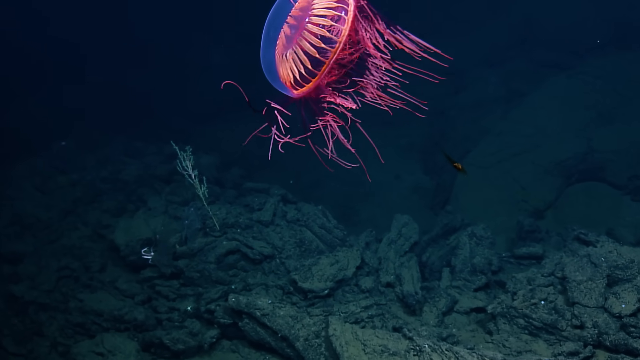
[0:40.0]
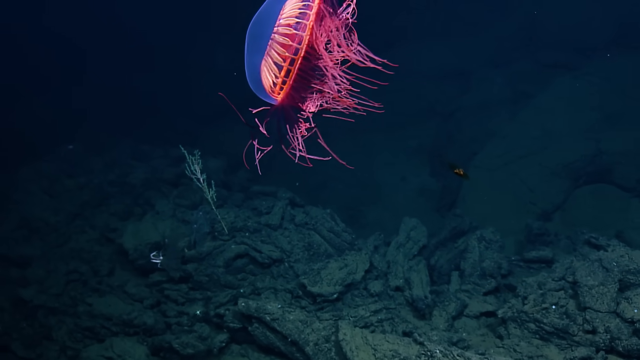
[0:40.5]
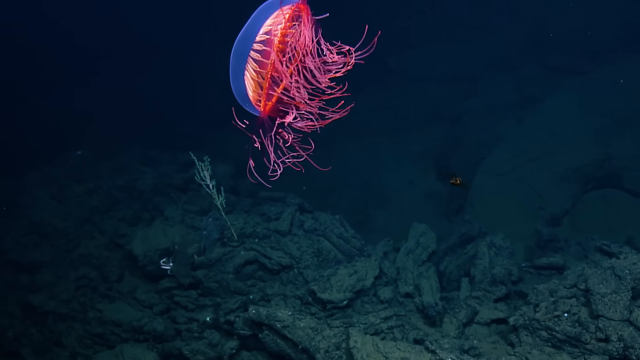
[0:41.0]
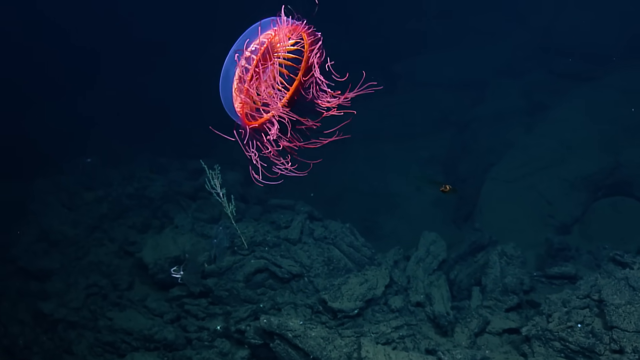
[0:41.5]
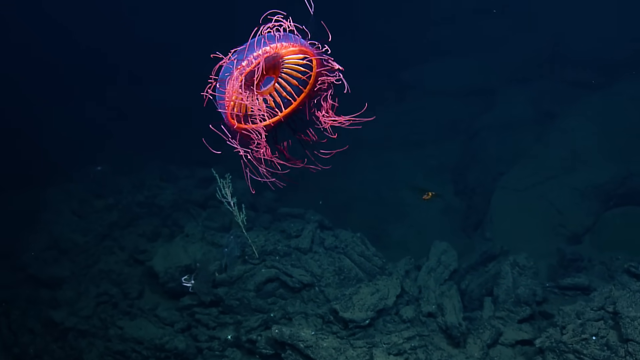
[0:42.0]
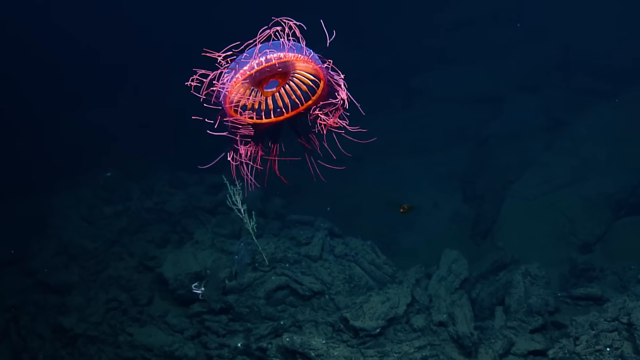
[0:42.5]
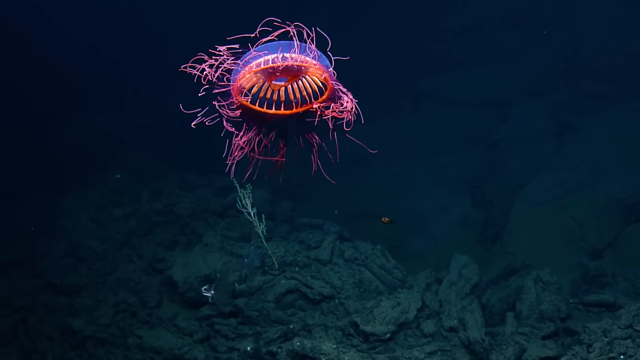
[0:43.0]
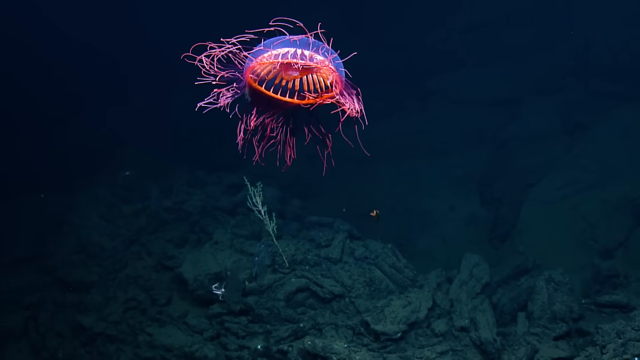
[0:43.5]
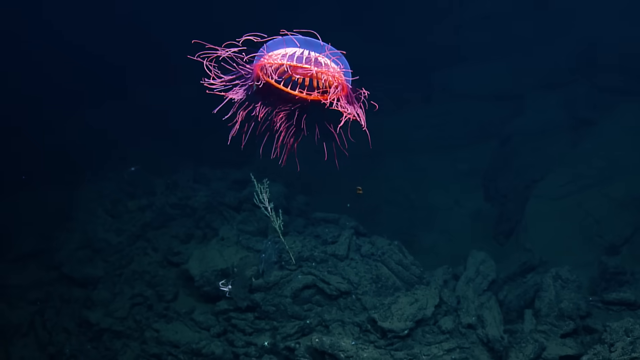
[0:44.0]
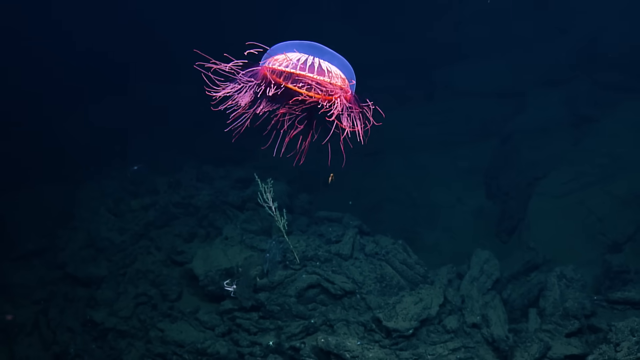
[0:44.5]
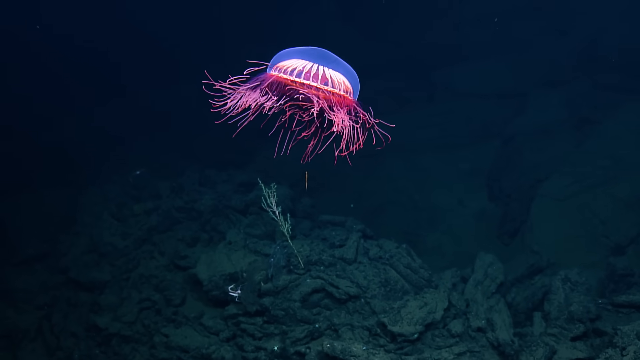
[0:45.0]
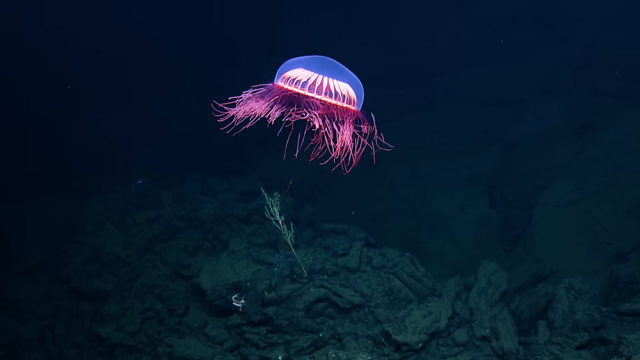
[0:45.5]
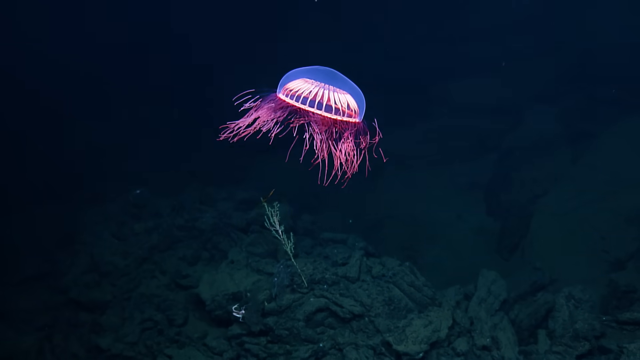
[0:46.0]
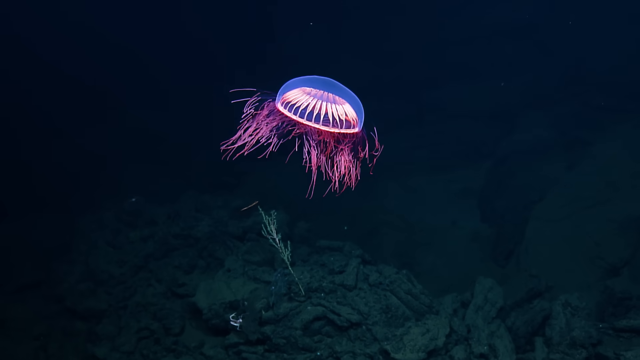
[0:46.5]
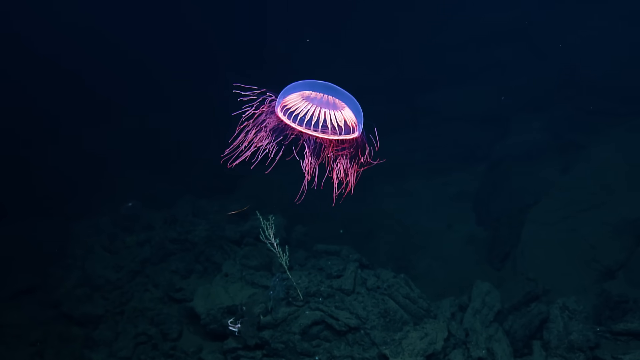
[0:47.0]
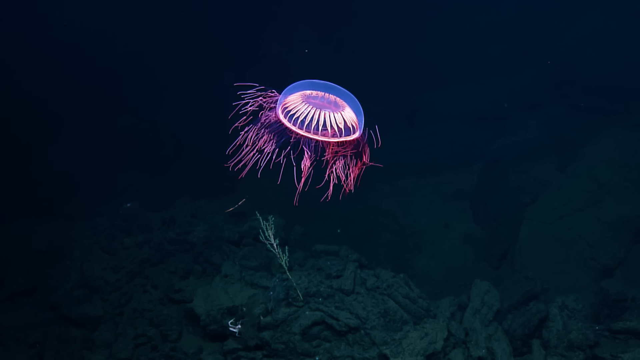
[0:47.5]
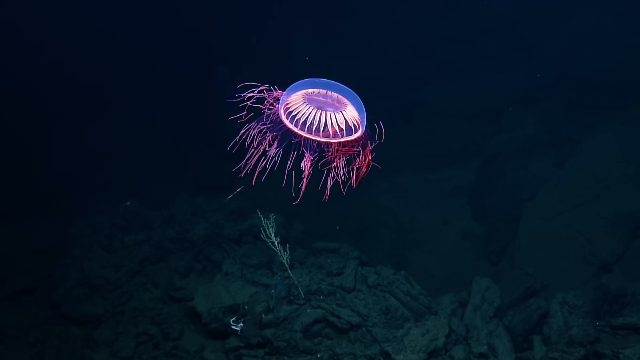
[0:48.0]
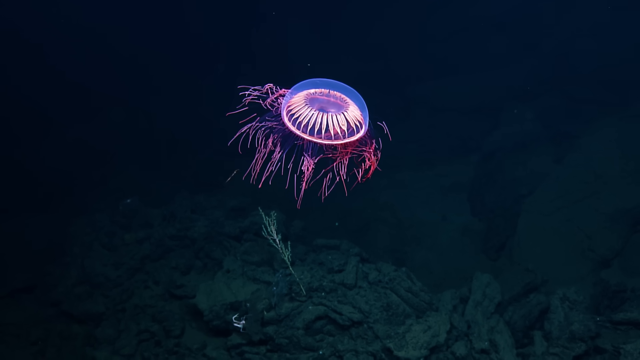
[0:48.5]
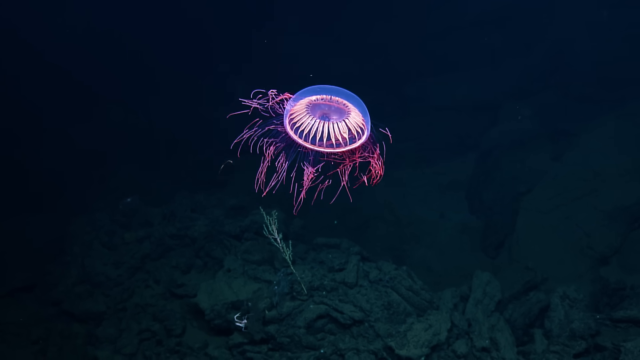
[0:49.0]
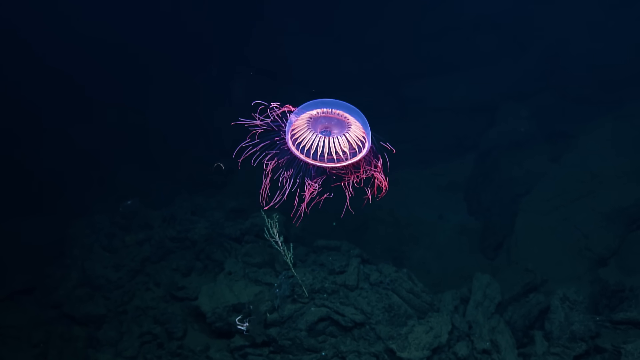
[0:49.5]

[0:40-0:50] The jellyfish does a 360 turn, after which its back comes into view. Before its full back is visible, it starts an upward turn that rotates it almost back into its original position, but not quite; during this maneuver it turns a little toward the viewer, slowing down as it turns. The tentacles look pink and stringy. While the front of the donut shape looked purple, the back of the donut is orange-looking, like an orange ring.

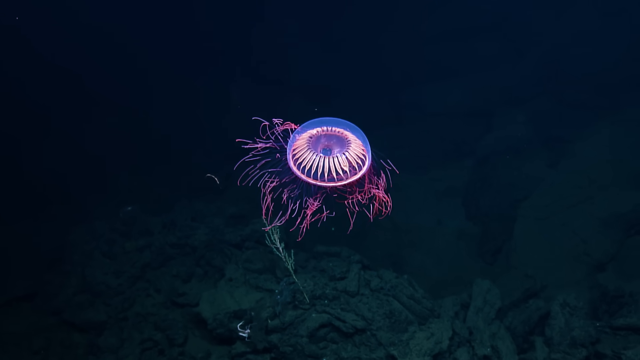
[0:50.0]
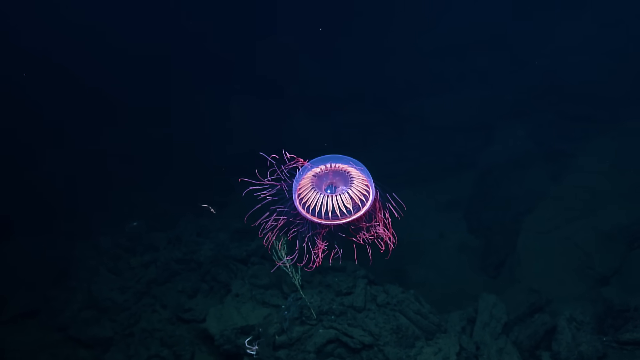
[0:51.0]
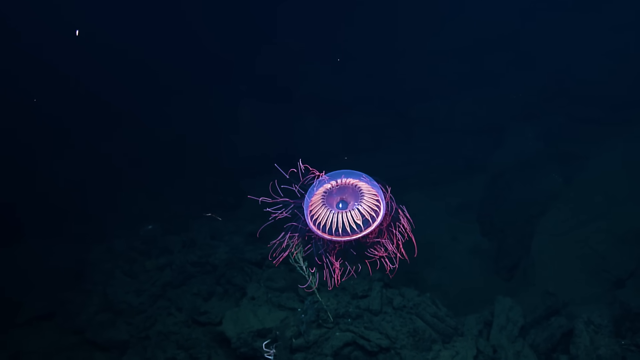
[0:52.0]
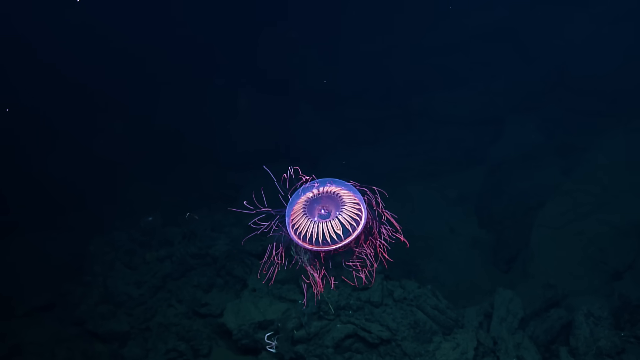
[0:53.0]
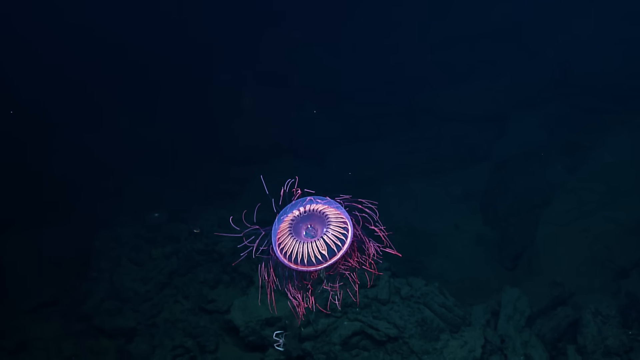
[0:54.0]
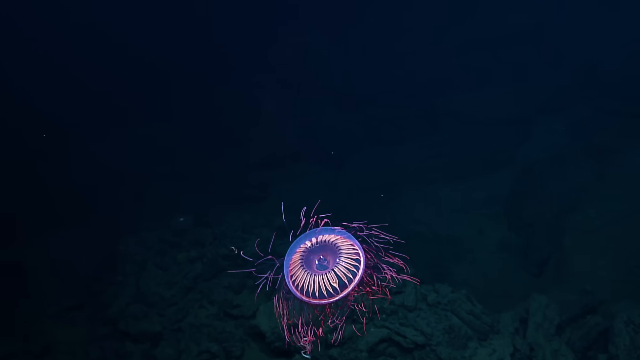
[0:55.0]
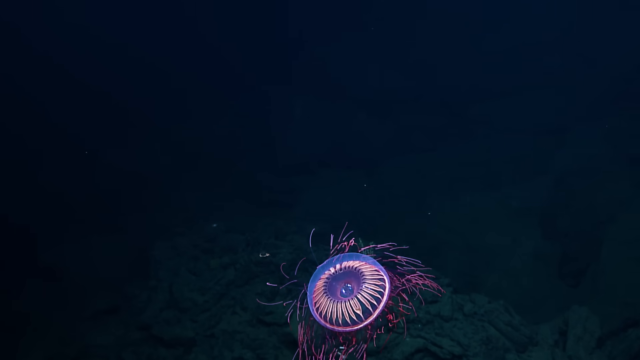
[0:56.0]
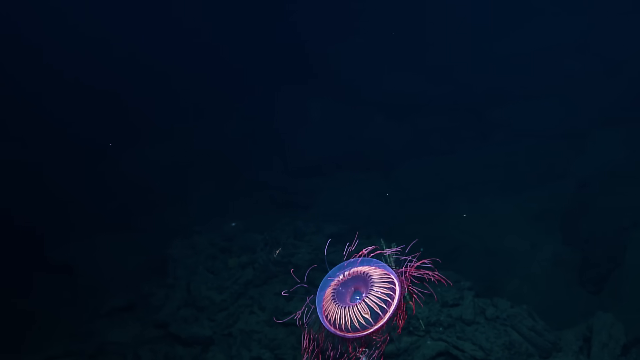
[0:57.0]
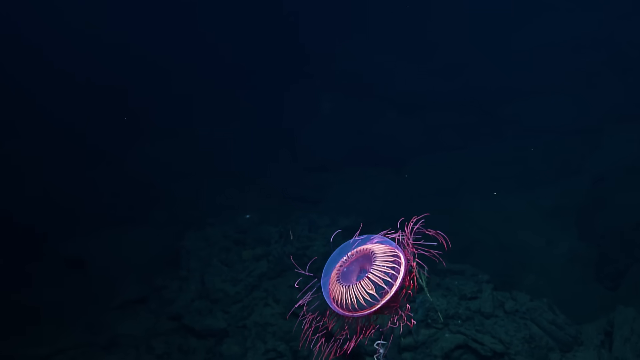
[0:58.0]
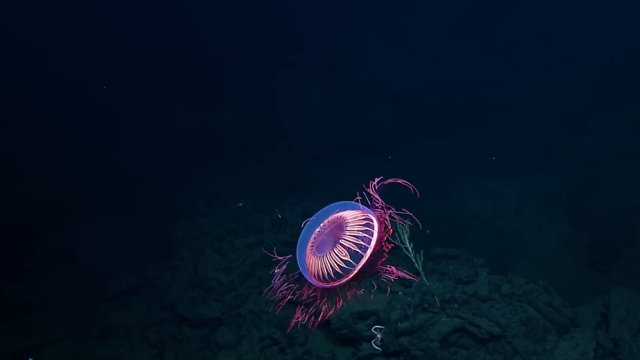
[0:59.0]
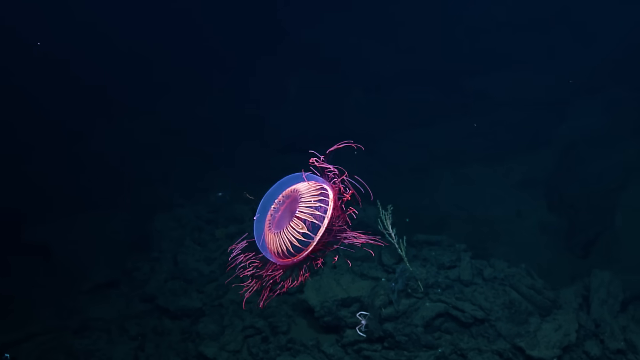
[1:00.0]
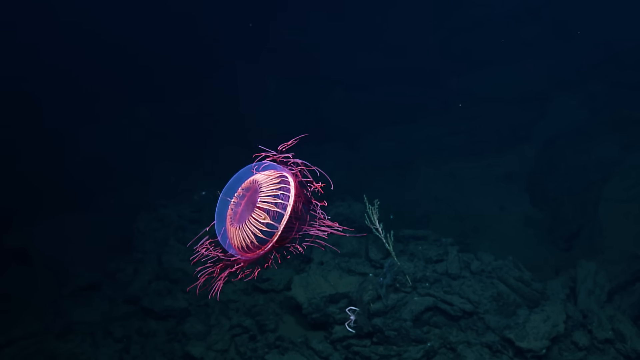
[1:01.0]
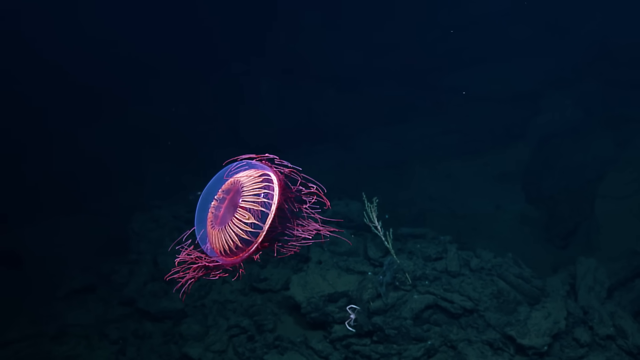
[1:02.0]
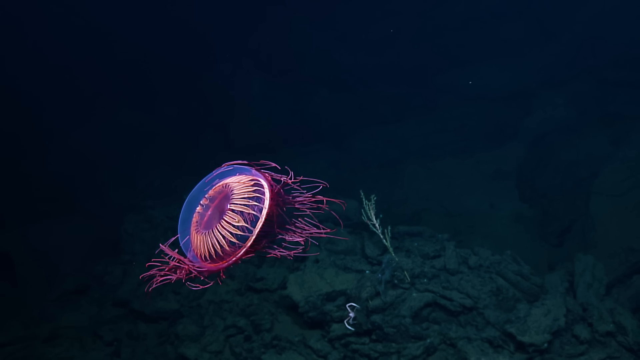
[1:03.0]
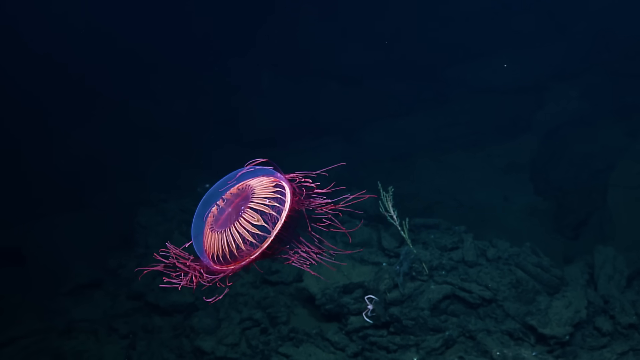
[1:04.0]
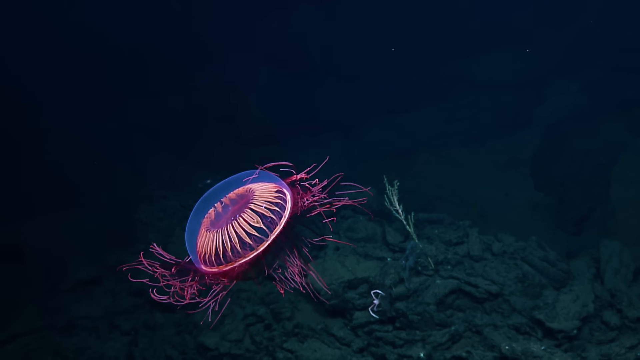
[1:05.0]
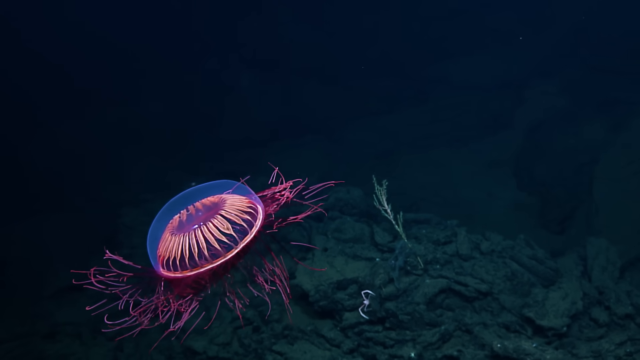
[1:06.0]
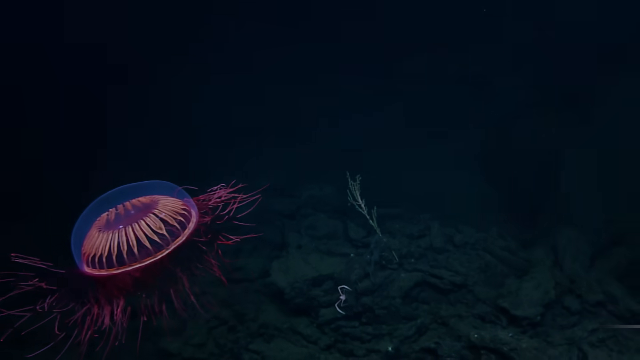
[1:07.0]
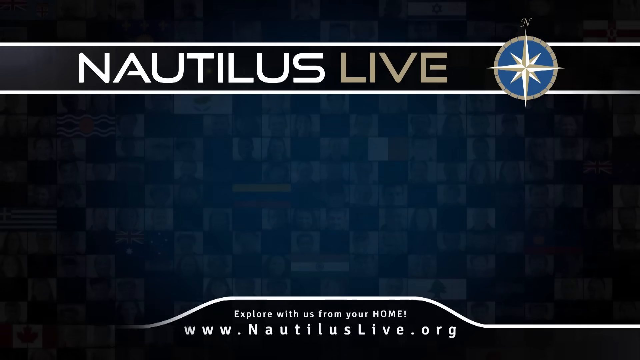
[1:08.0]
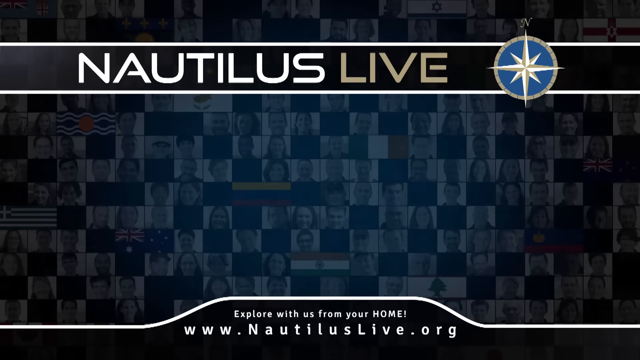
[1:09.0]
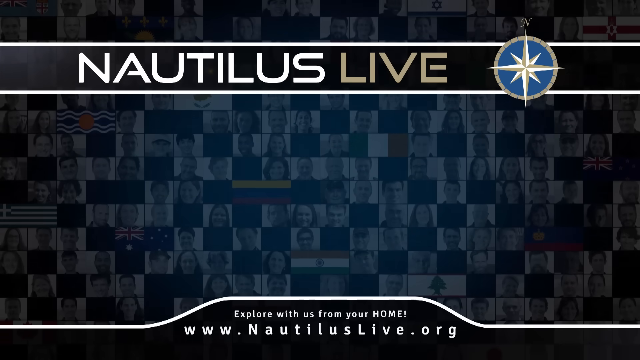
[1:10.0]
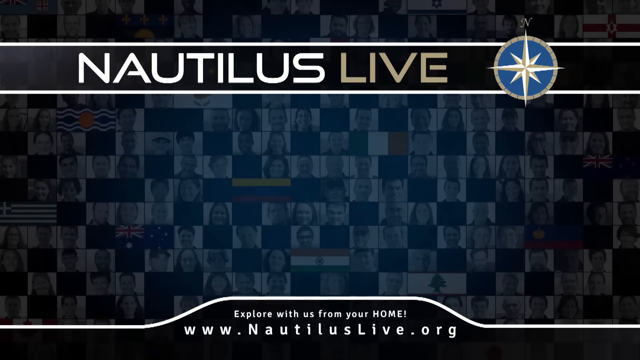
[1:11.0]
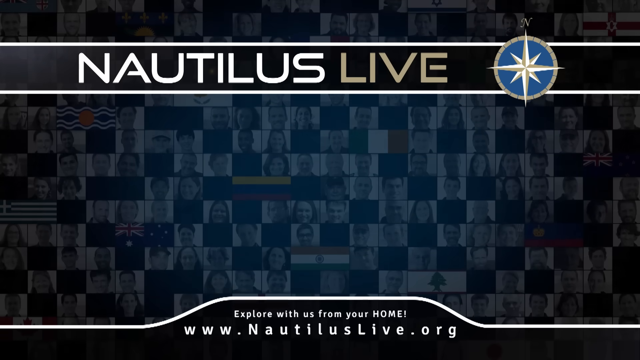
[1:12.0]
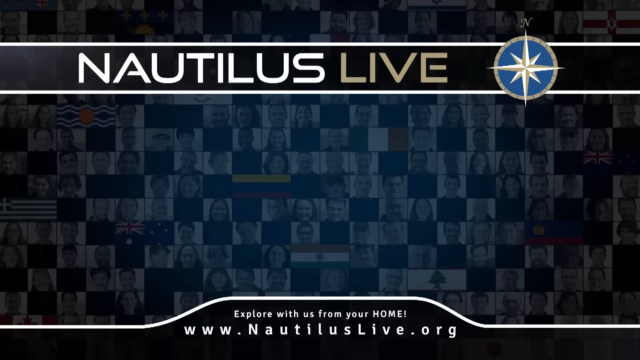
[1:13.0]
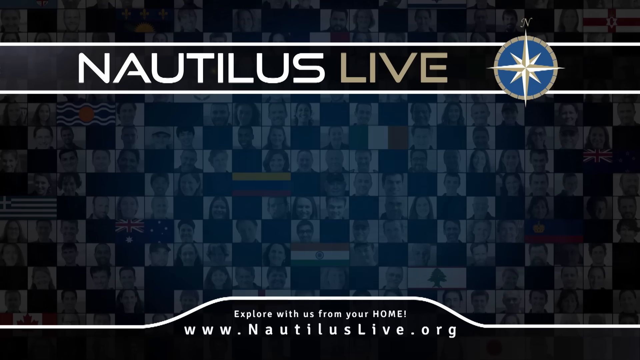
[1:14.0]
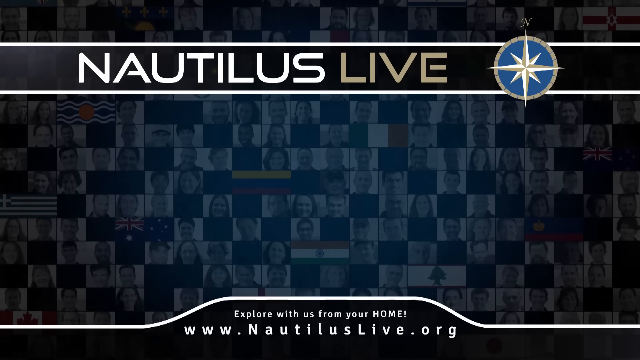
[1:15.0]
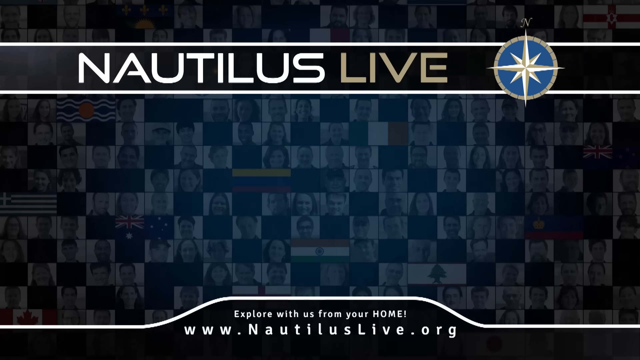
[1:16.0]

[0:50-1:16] The jellyfish, near its original position, looks like it is sinking downward, then starts to move leftward and face the left. Its orientation keeps changing as it floats underwater. In what looks like it could be the outro, the screen fades to dark and a new background appears: a grid of many different faces, with some squares black and some squares showing patterns. The logo in the top banner reads "Nautilus Live", with a blue and gold compass to the right of the words; the compass says "North" at the top. At the bottom of the screen, text reads "explore with us from your home, www.nautiluslive.org".